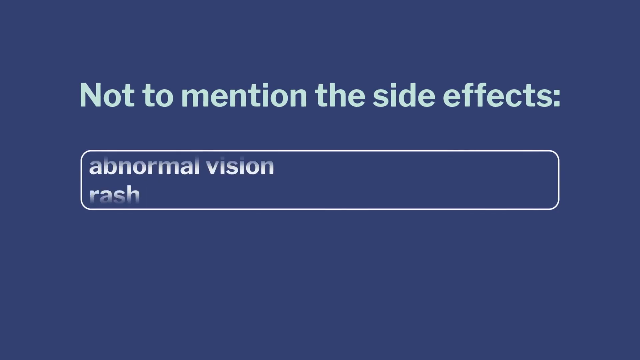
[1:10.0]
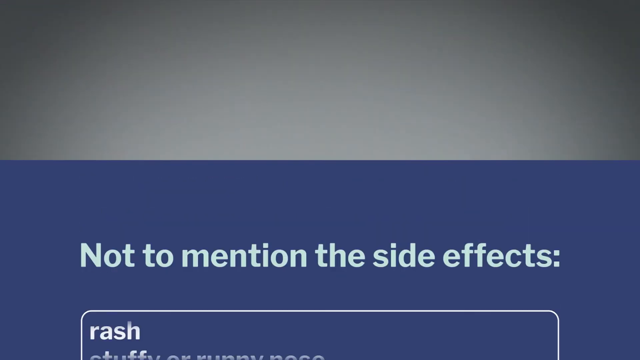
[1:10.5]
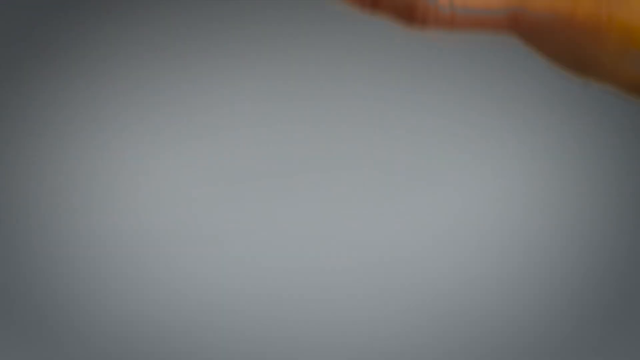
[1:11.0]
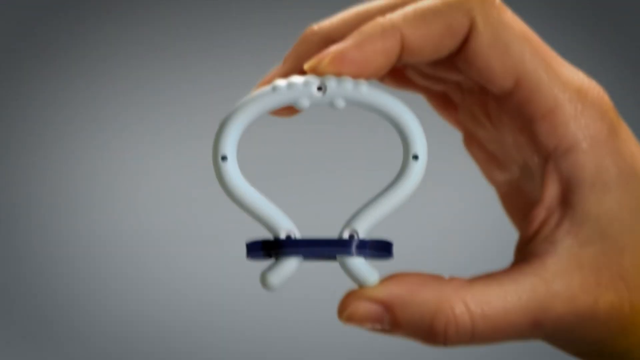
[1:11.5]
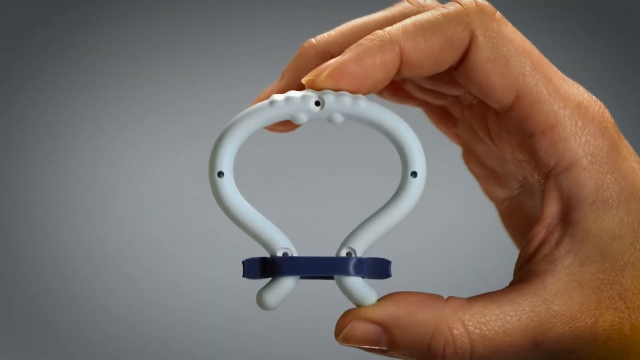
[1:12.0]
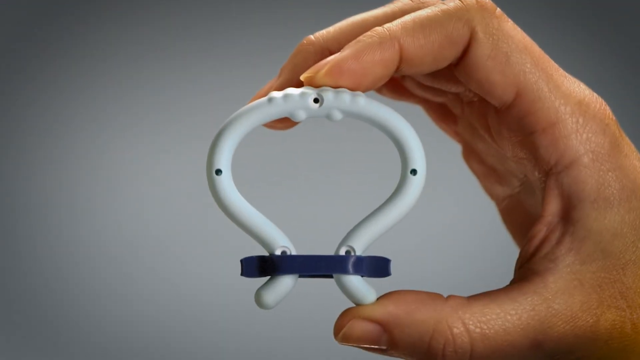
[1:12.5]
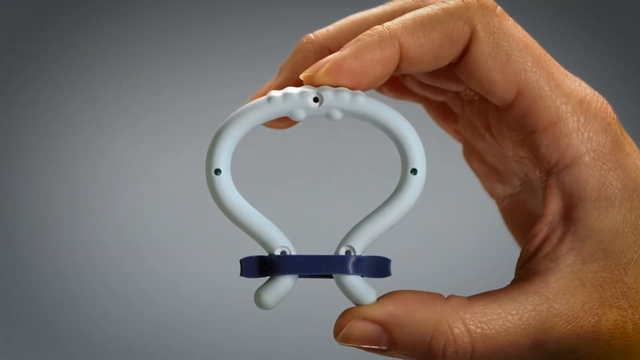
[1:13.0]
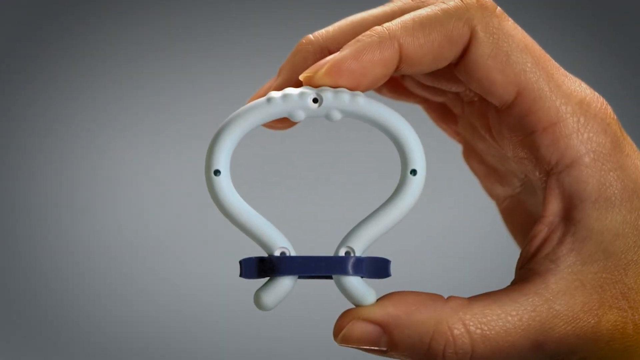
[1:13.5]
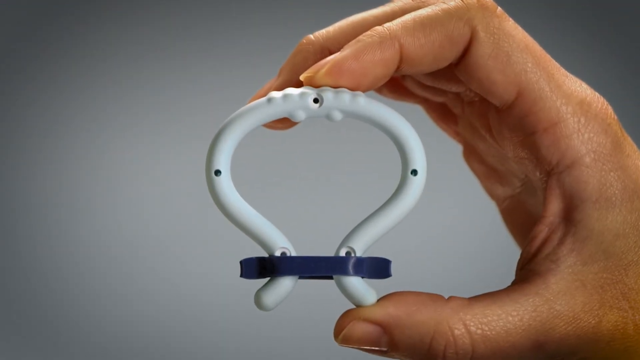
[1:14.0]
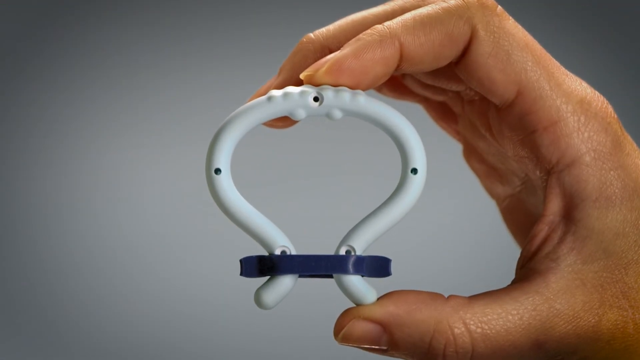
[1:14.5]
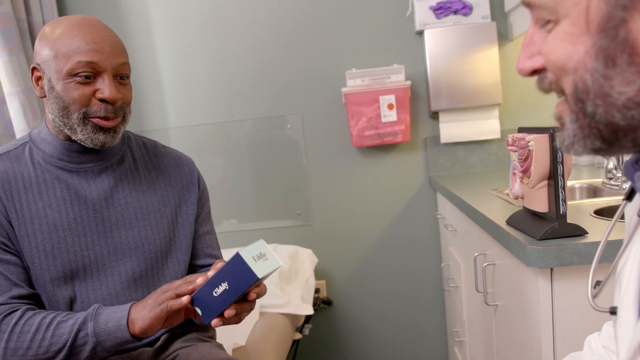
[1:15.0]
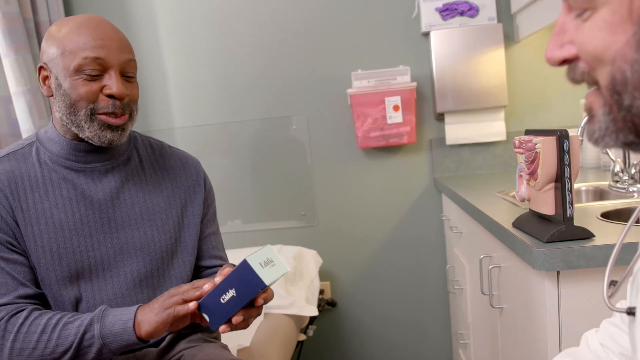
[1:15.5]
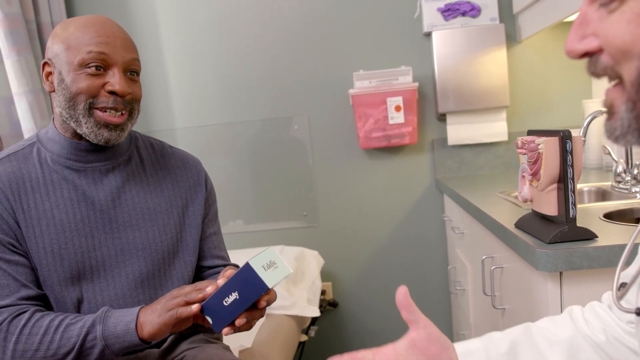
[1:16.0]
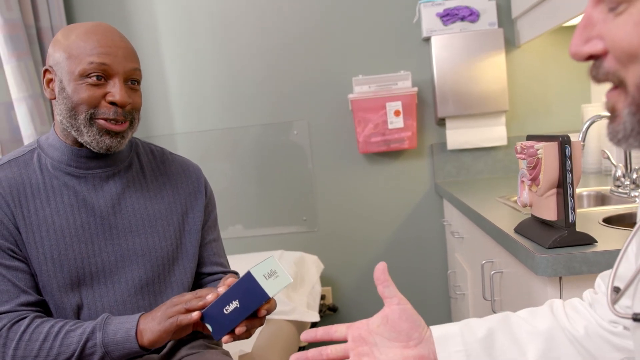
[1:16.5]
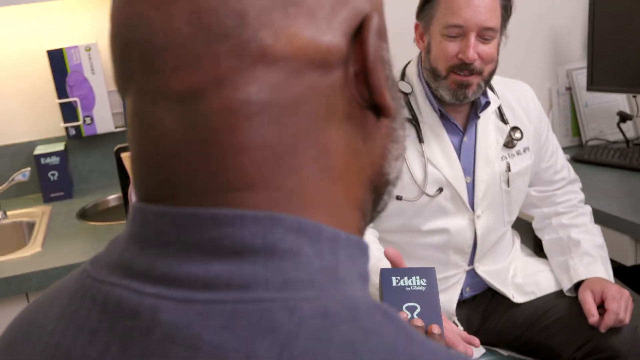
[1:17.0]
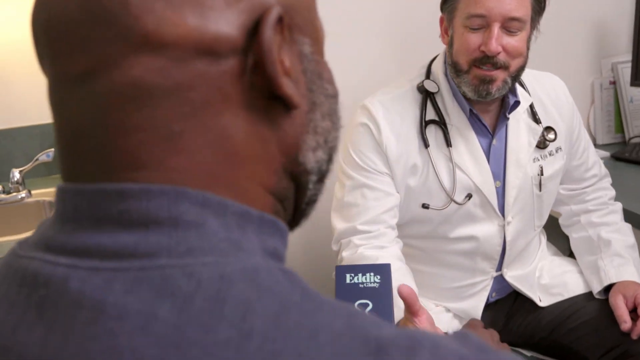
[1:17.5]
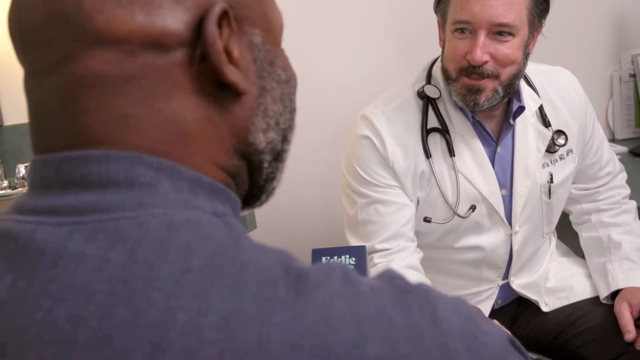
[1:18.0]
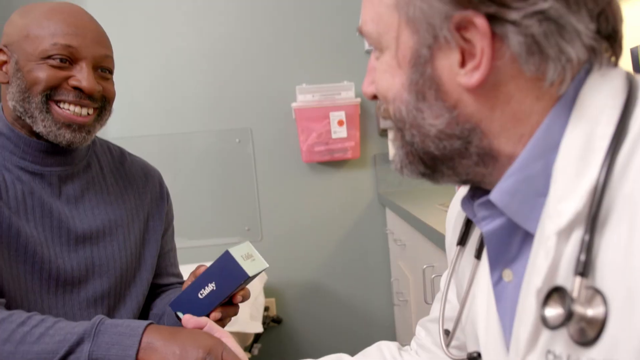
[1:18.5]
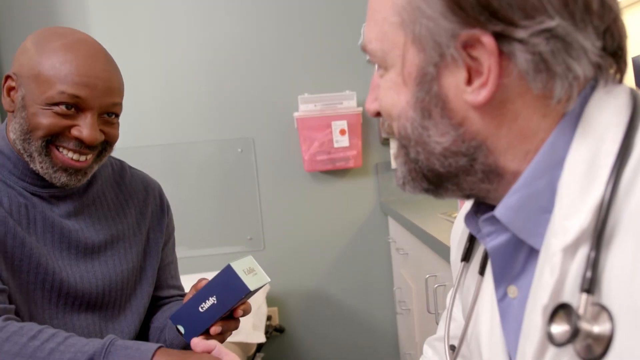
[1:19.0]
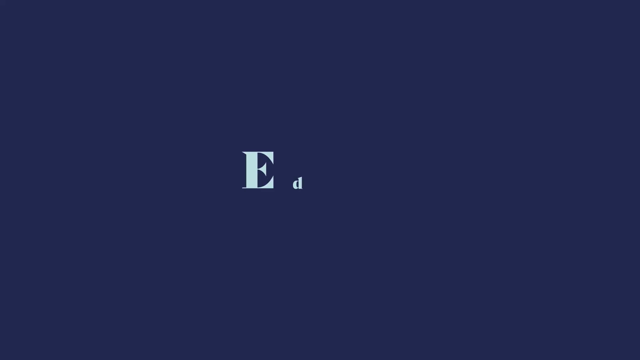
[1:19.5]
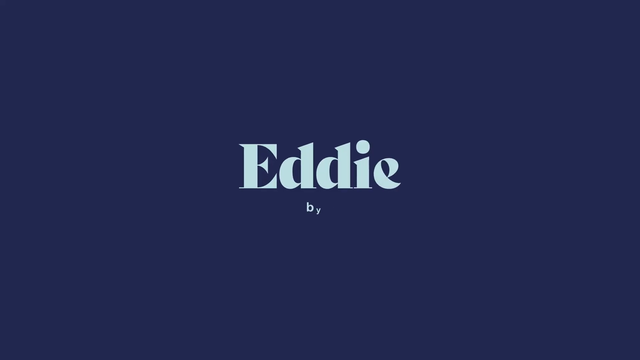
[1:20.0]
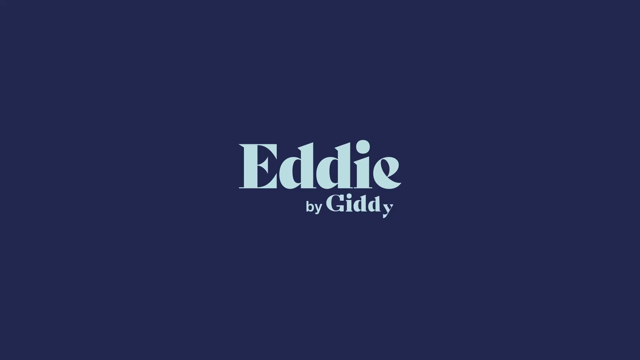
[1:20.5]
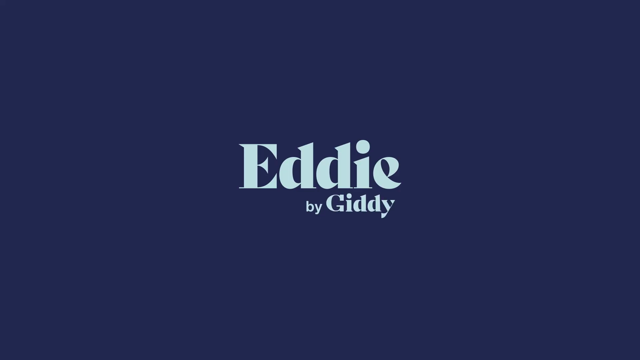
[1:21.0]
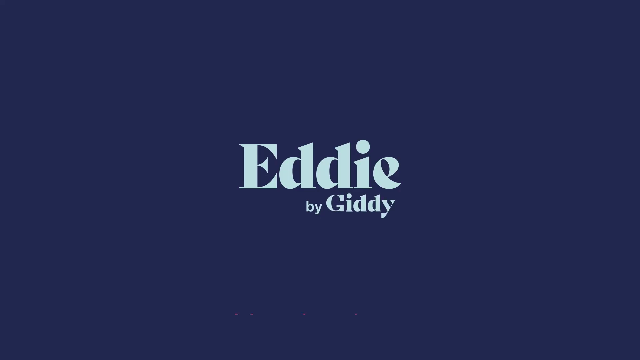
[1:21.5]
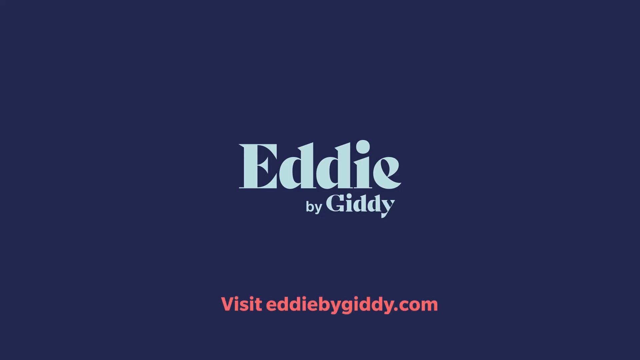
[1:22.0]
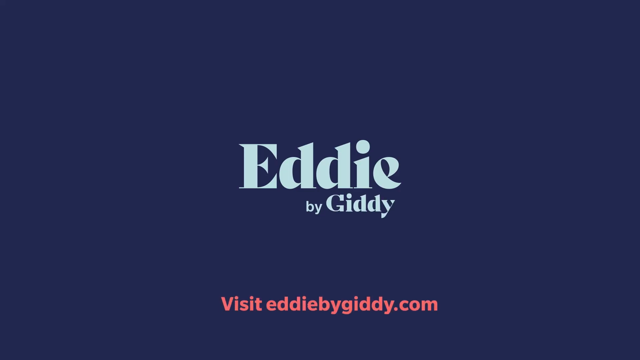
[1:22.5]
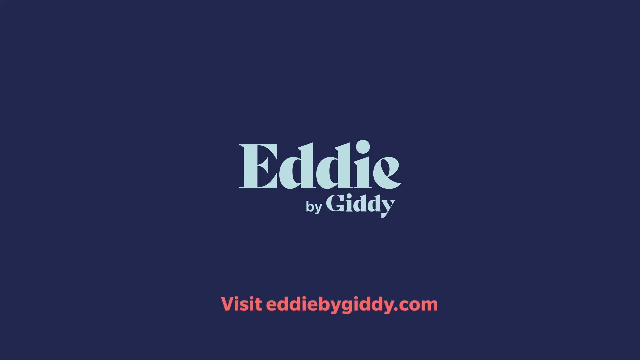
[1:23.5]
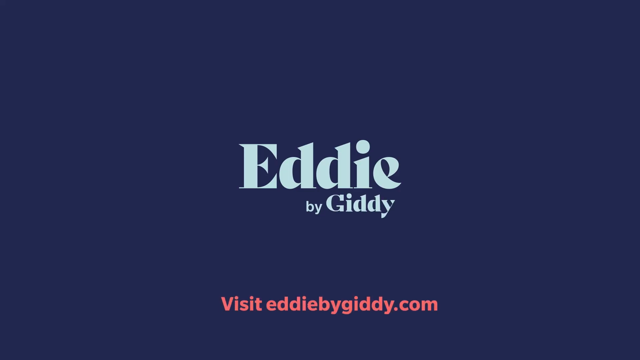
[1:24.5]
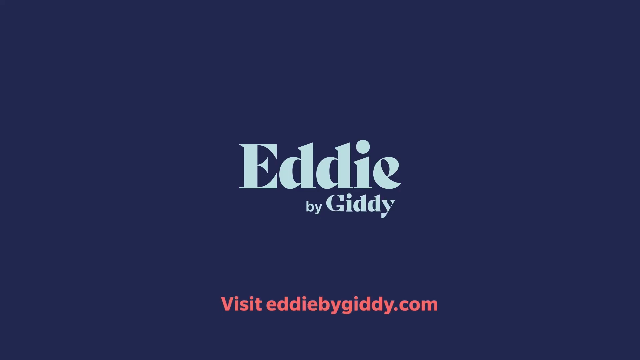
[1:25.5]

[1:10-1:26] The list of symptoms continues, including abnormal vision and rash. The device itself is shown again. Then, in what appears to be a medical facility with kind of a greenish backdrop, an African-American man with a shaved head, a beard and a mustache sits talking with a white man dressed as a doctor in a white coat with a stethoscope draped around his neck. Everyone is smiling, and at the end they shake hands, looking very happy. The scene fades to the Eddie by Giddy corporate logo, which animates onto the screen. The earlier screens were dark blue, but this one is black with off-white lettering advertising the product.